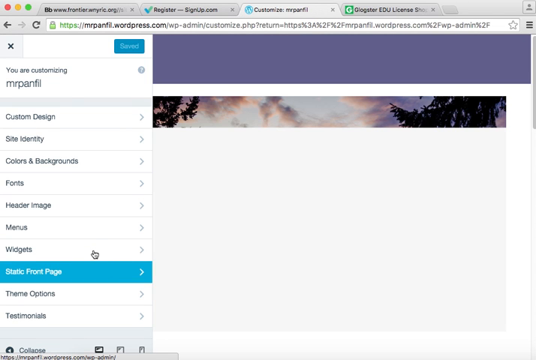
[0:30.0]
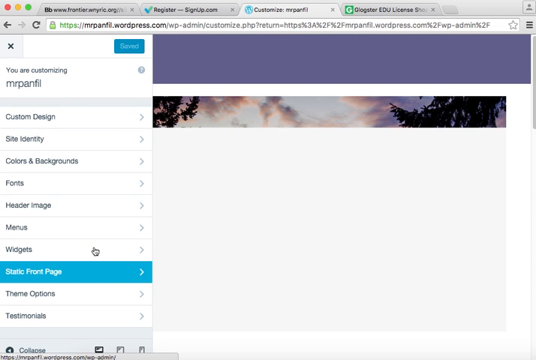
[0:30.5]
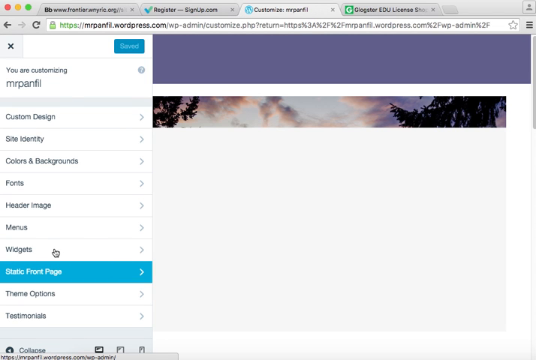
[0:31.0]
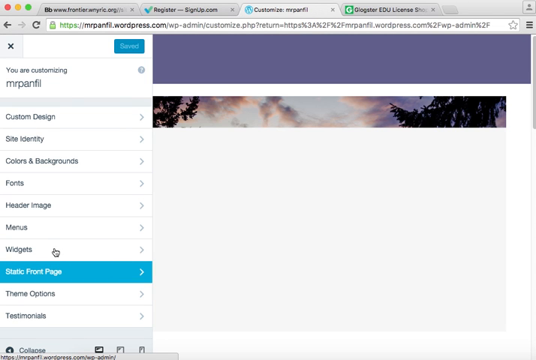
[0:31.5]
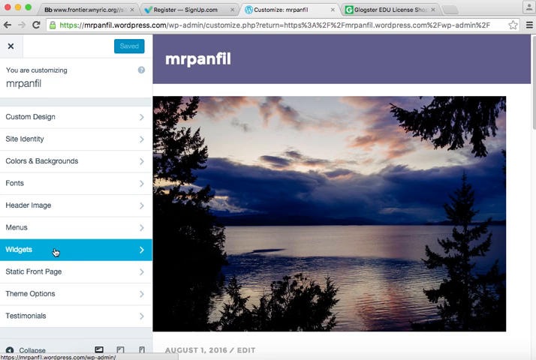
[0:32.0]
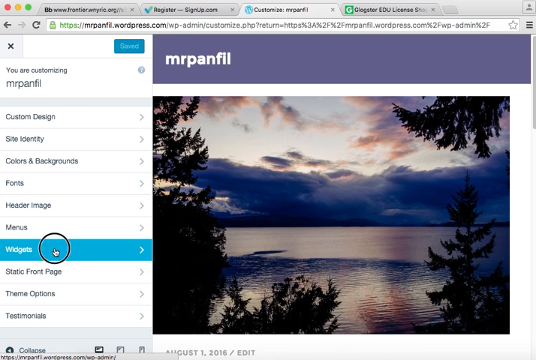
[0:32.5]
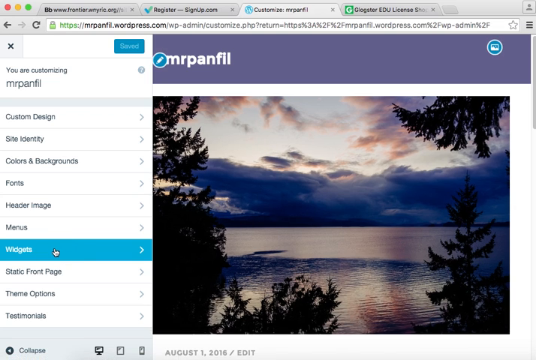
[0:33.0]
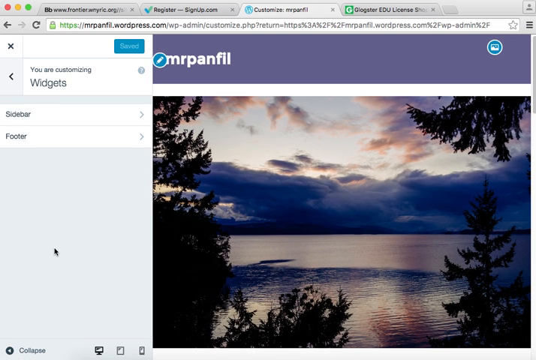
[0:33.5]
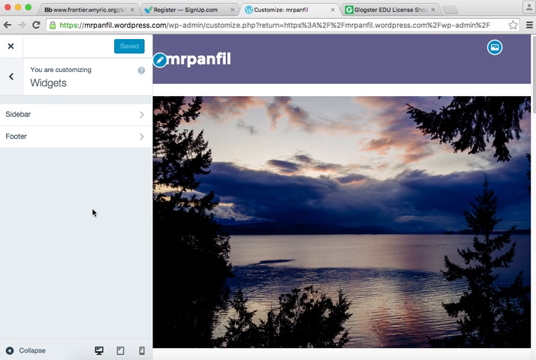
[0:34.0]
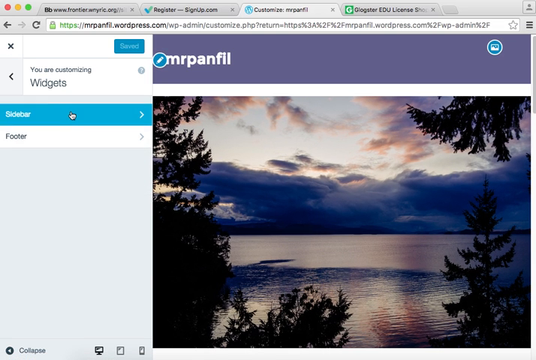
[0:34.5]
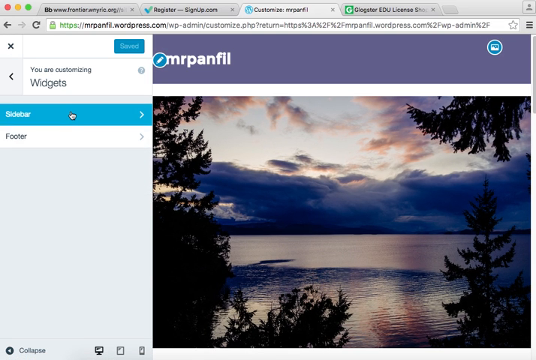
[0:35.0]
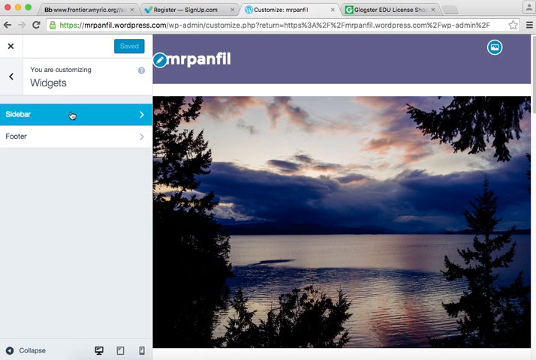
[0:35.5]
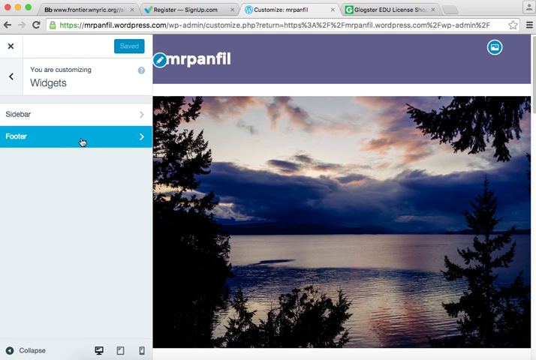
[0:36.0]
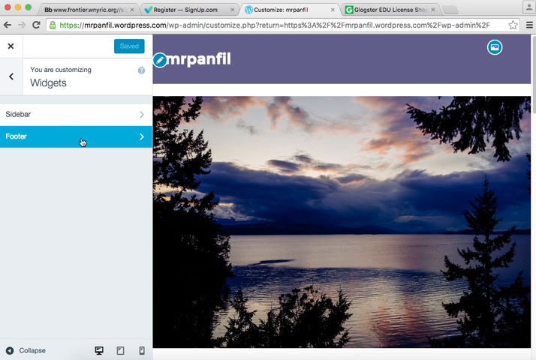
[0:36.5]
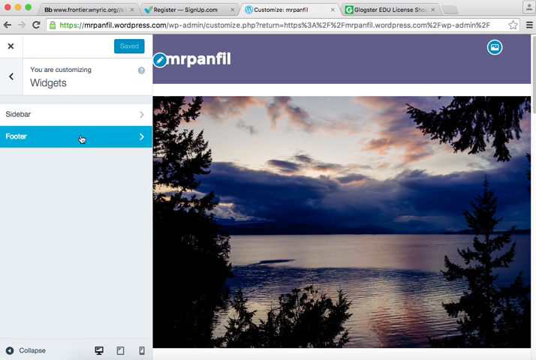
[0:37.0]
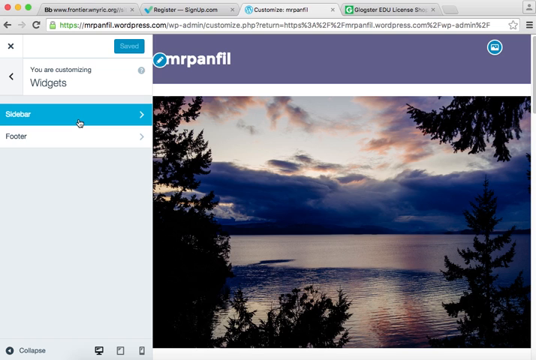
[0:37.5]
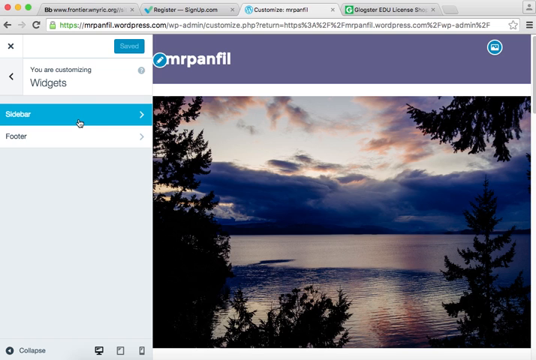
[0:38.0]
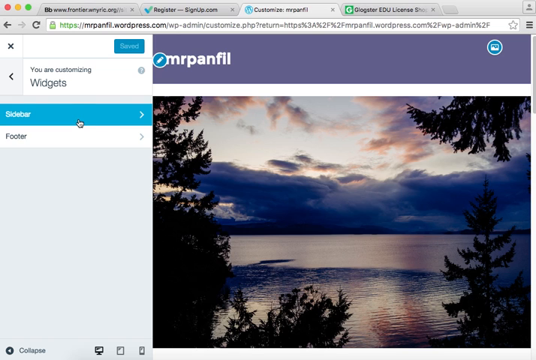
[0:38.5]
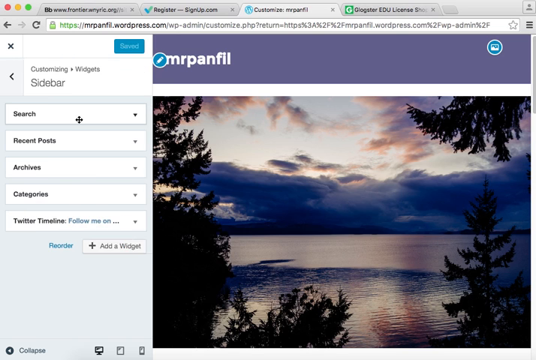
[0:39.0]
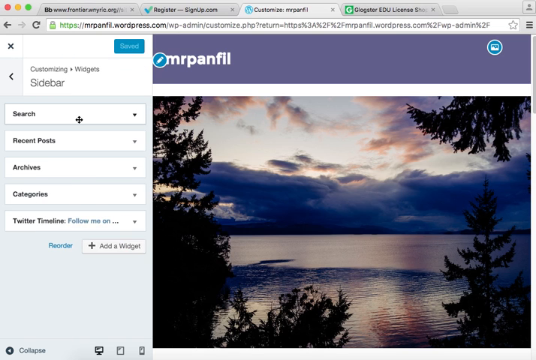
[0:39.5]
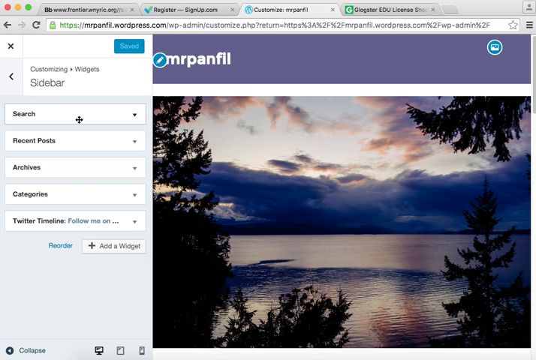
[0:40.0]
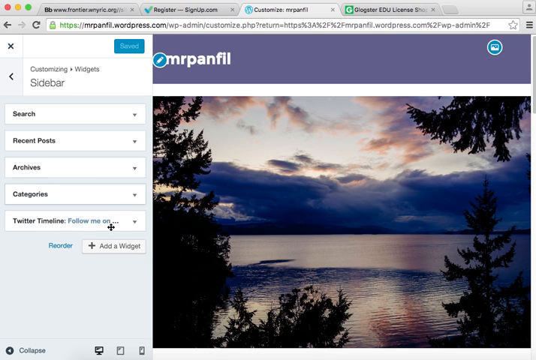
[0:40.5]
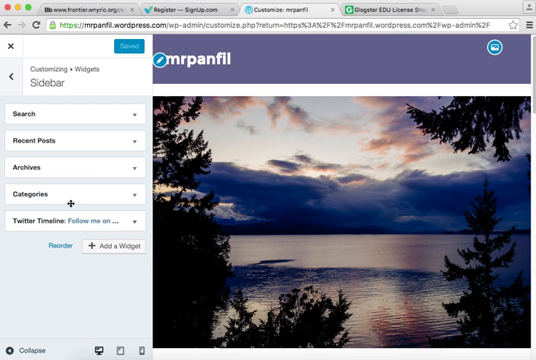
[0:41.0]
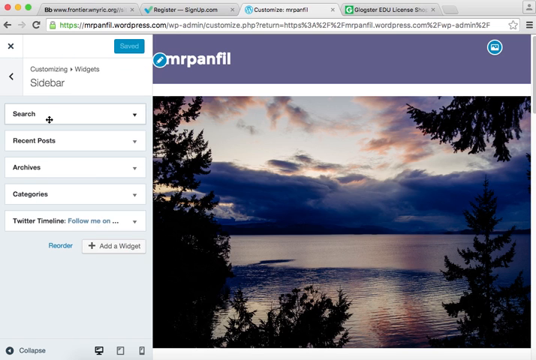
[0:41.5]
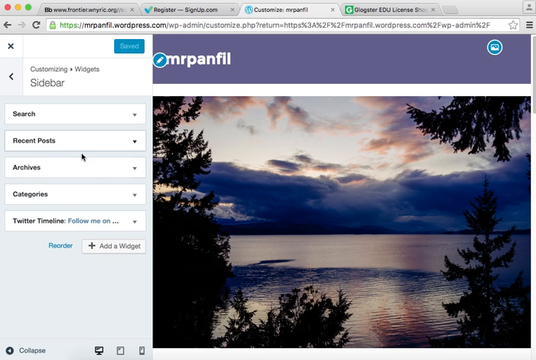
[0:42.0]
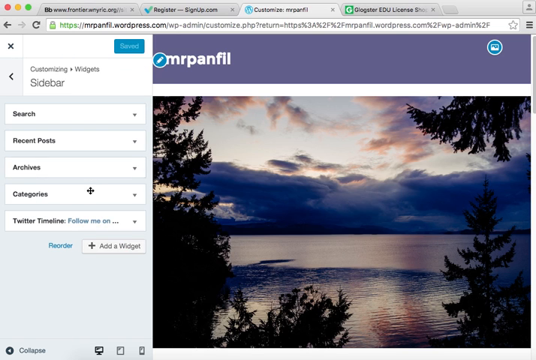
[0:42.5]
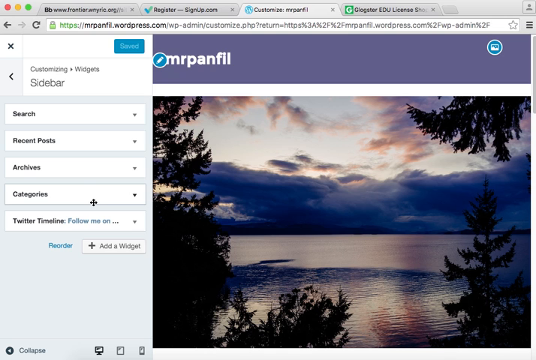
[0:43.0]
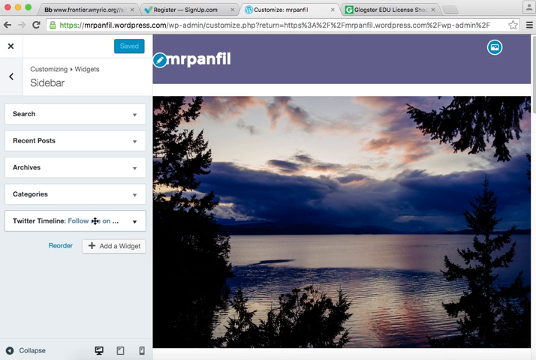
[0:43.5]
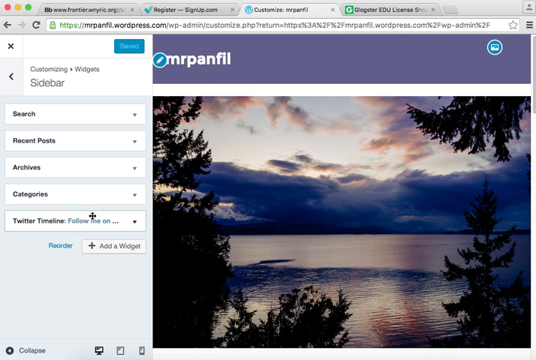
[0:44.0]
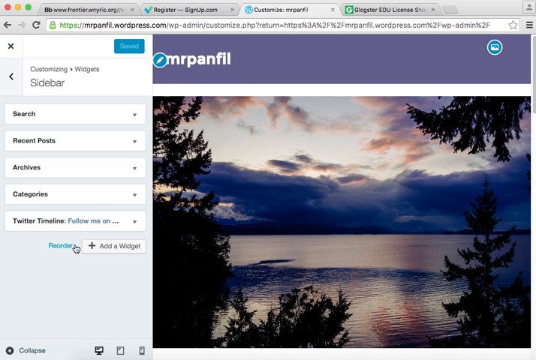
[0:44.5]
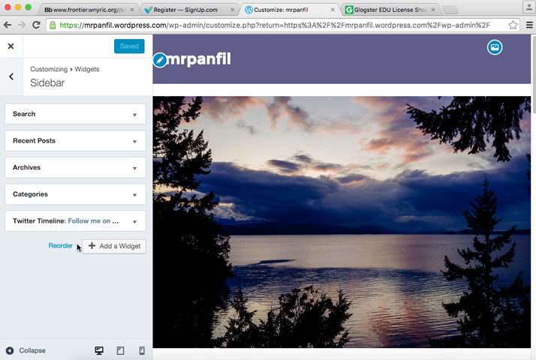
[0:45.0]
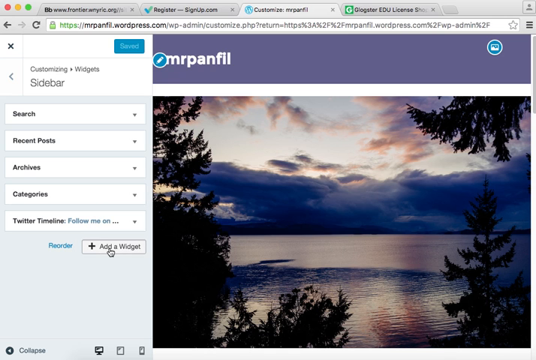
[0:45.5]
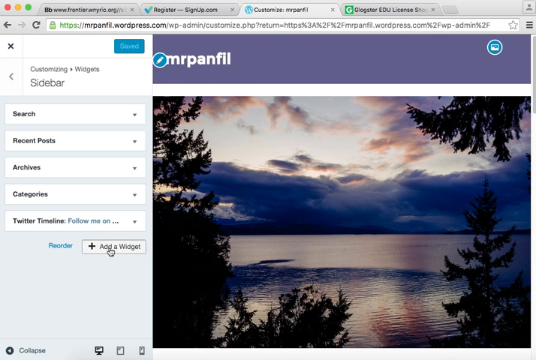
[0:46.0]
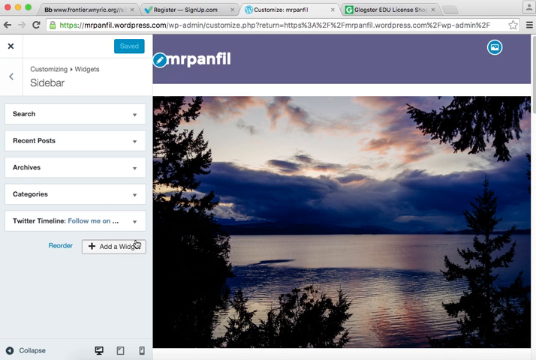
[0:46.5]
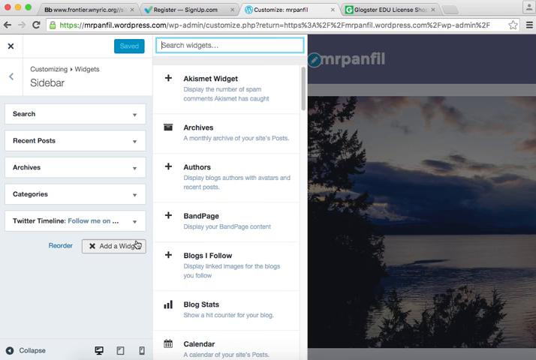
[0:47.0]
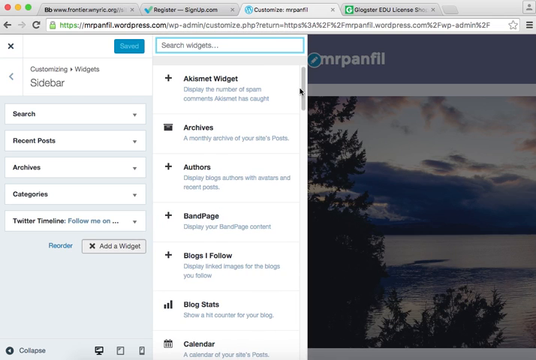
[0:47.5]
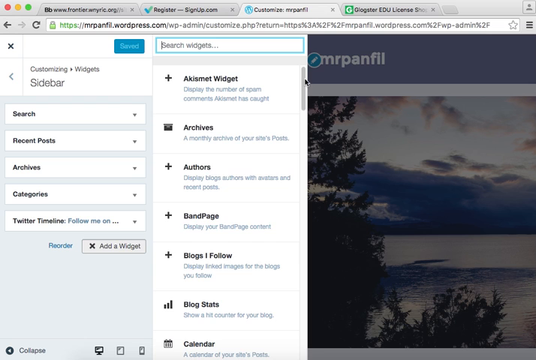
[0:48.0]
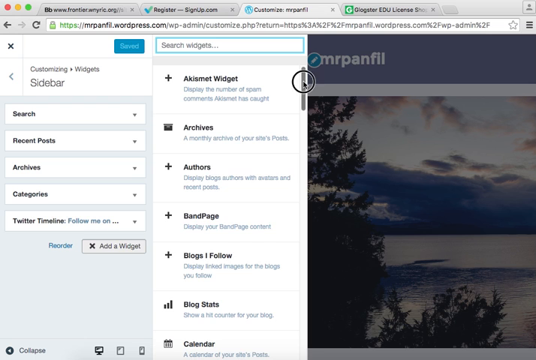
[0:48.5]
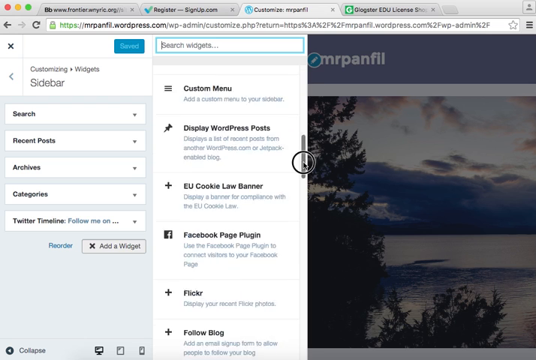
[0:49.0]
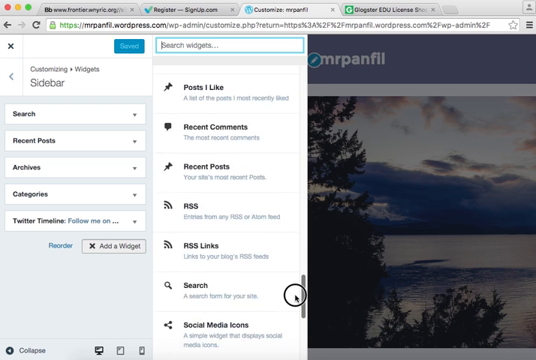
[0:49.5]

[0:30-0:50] On a WordPress admin page, the person is trying to change a setting. From the navigation on the left, they click to enter Widgets. They select Widgets and choose Sidebar, then go down to the bottom to Add Widget. They then scroll all the way down, looking for something, and what they do after that is not shown.